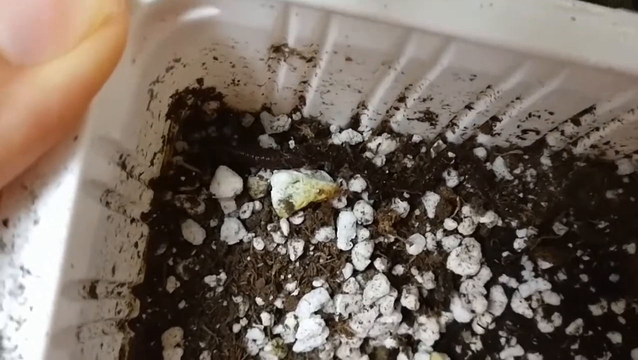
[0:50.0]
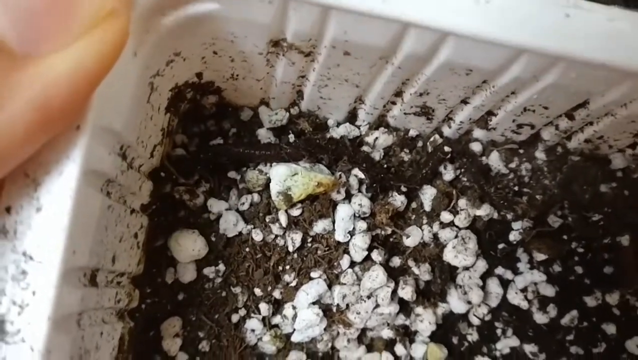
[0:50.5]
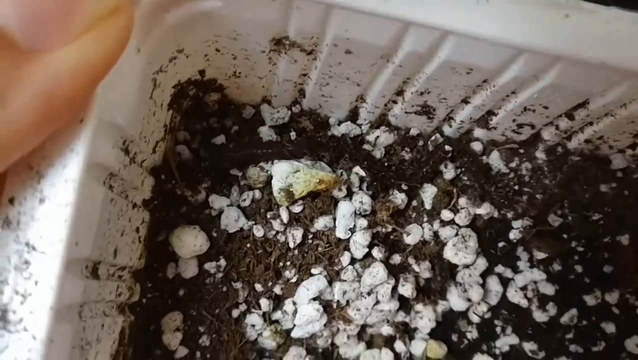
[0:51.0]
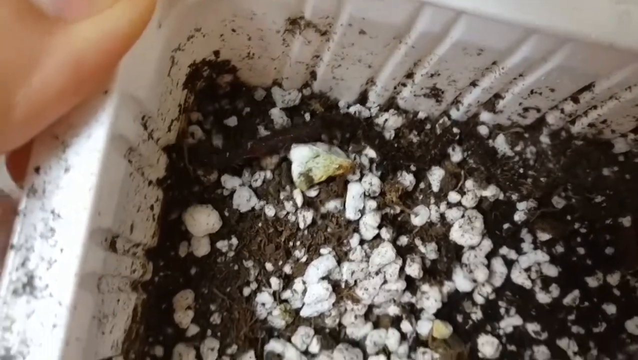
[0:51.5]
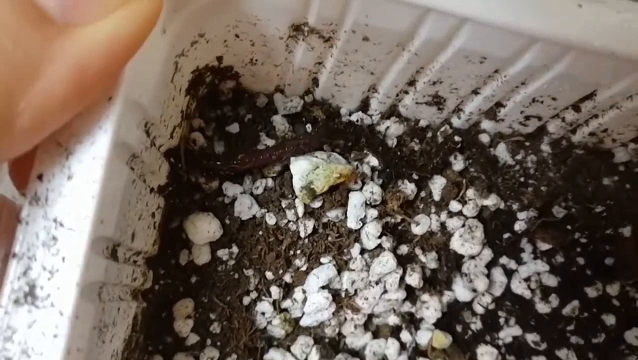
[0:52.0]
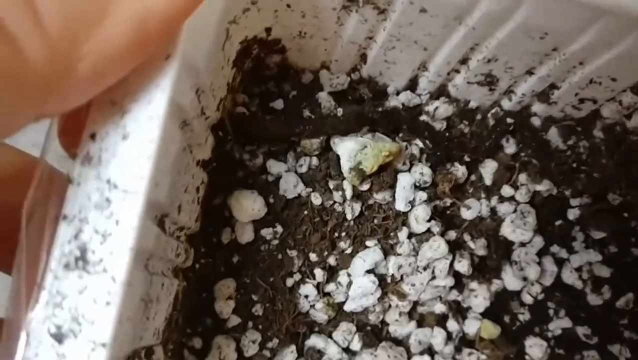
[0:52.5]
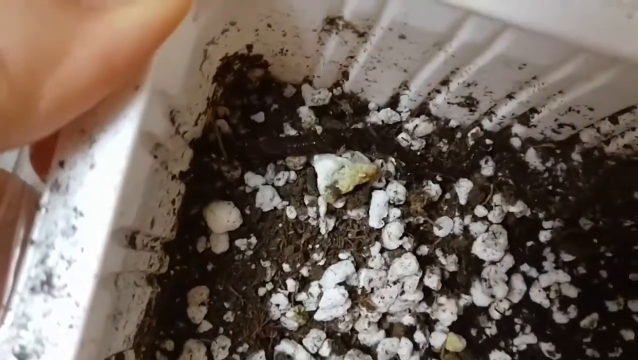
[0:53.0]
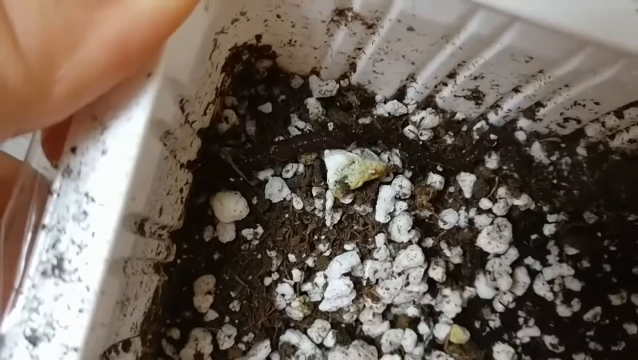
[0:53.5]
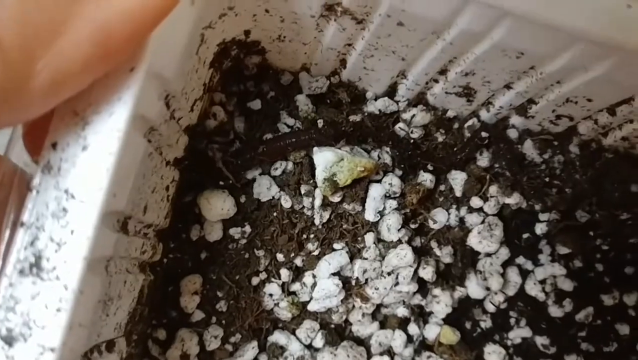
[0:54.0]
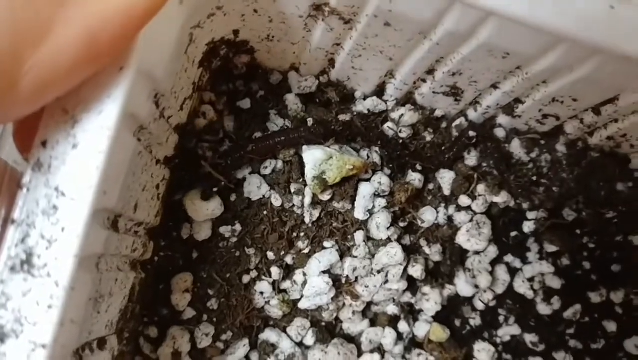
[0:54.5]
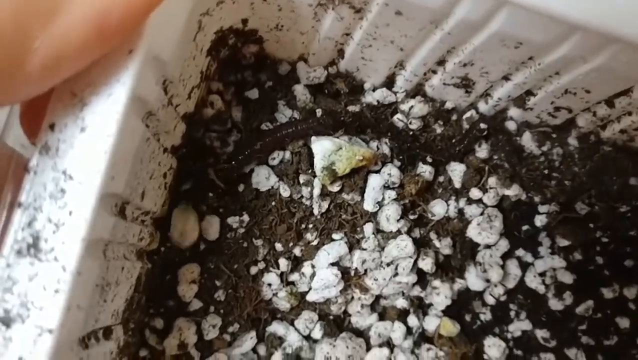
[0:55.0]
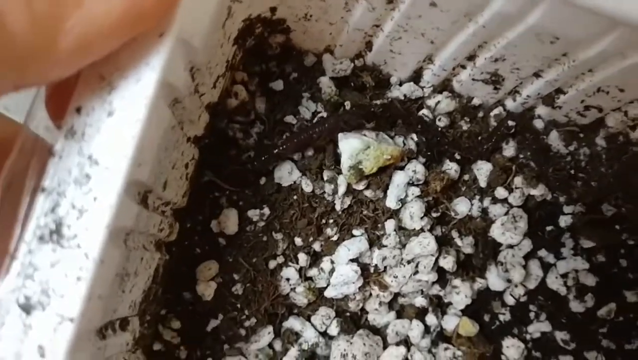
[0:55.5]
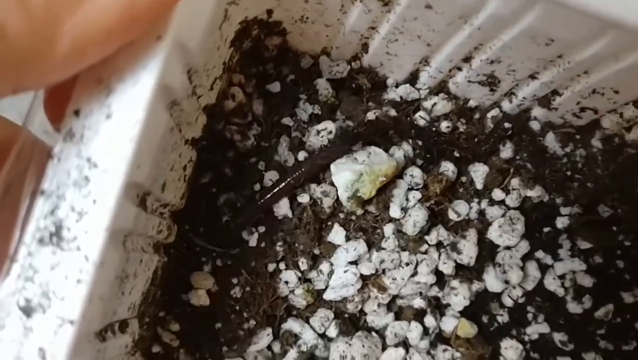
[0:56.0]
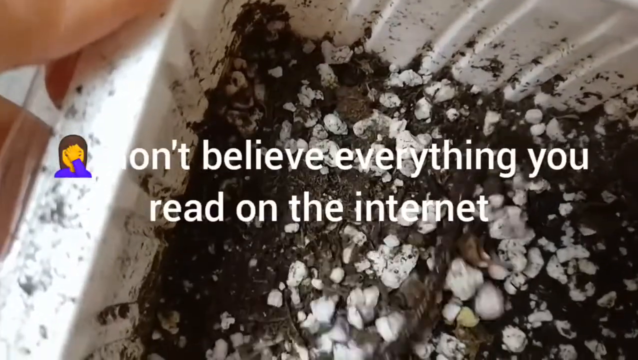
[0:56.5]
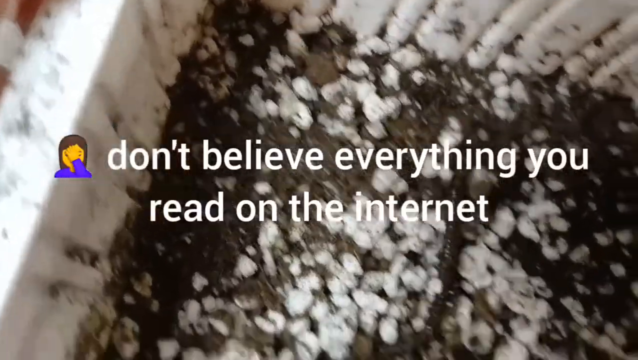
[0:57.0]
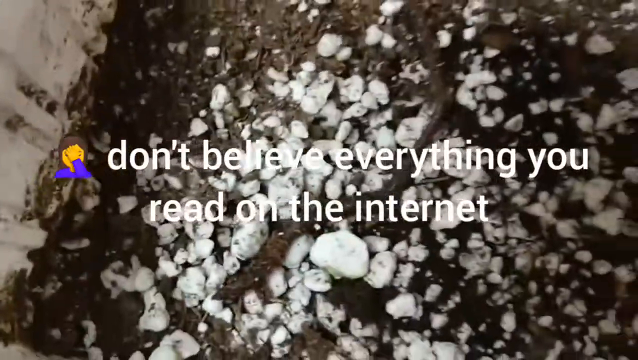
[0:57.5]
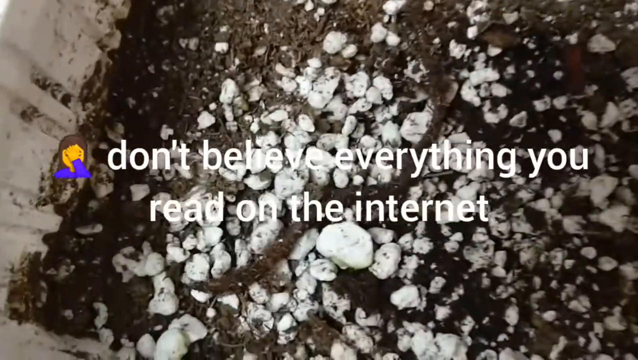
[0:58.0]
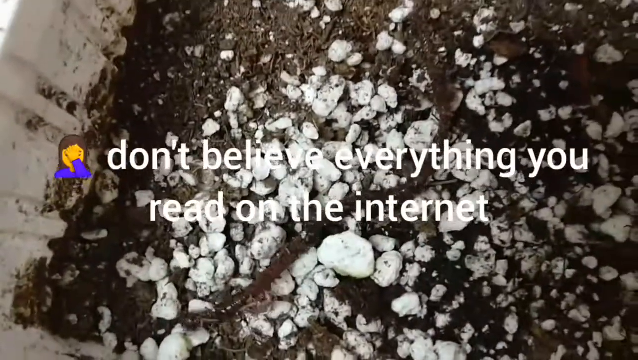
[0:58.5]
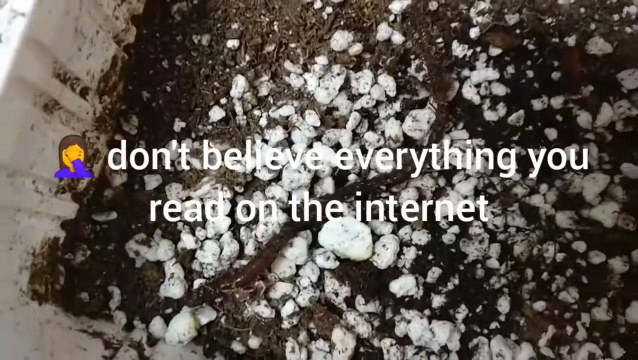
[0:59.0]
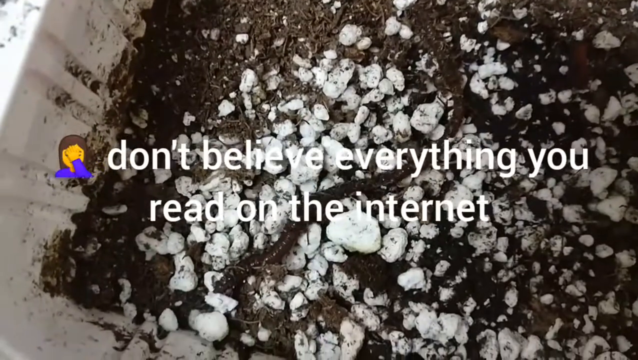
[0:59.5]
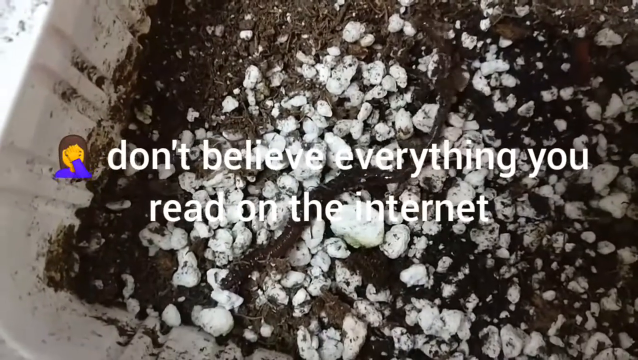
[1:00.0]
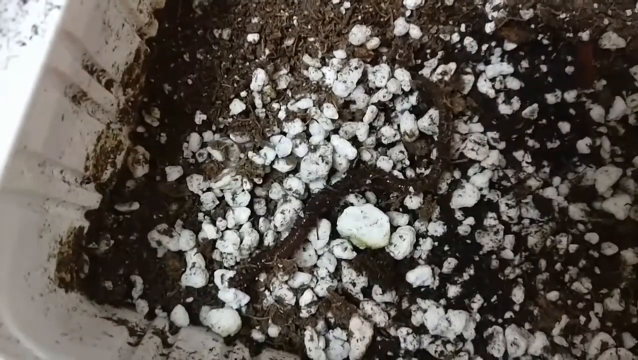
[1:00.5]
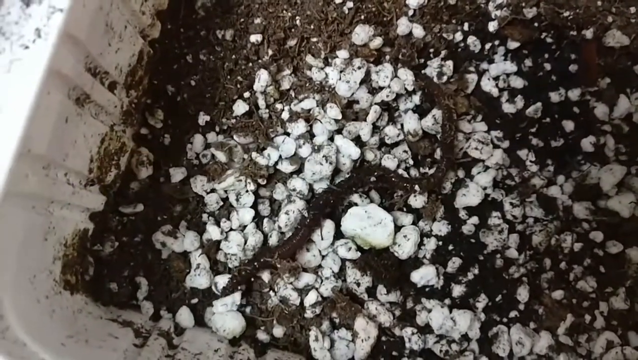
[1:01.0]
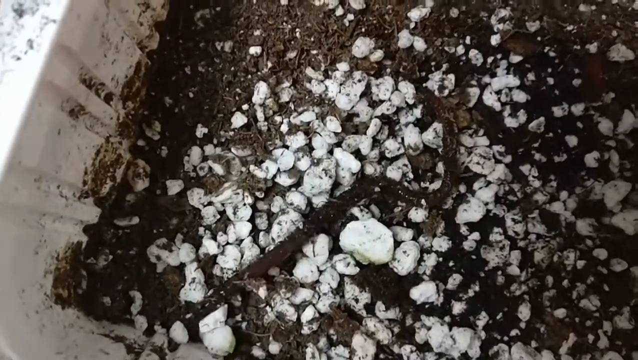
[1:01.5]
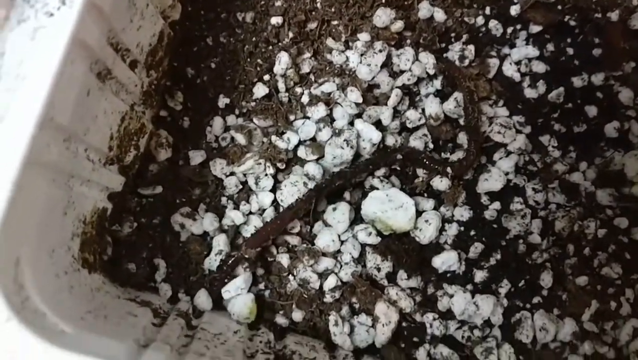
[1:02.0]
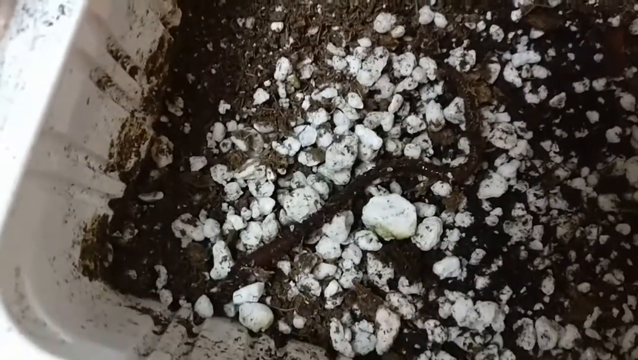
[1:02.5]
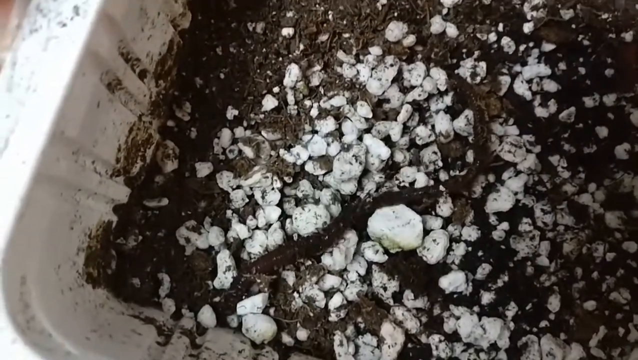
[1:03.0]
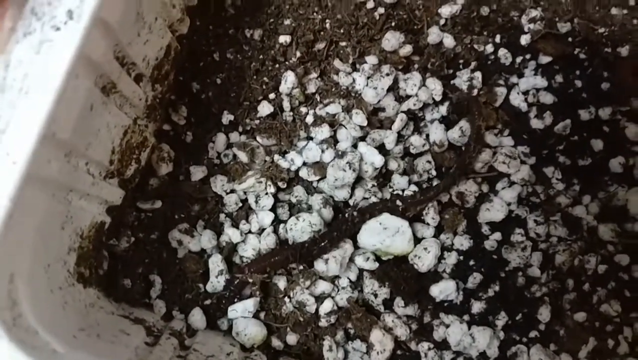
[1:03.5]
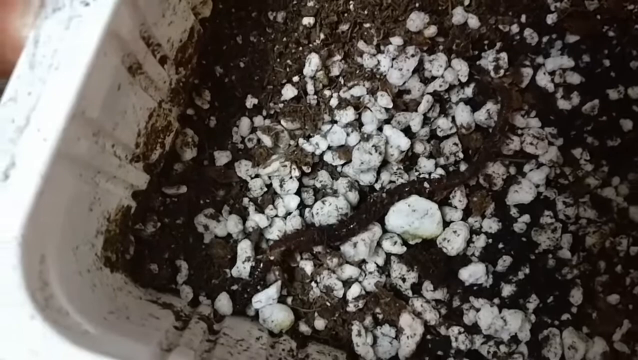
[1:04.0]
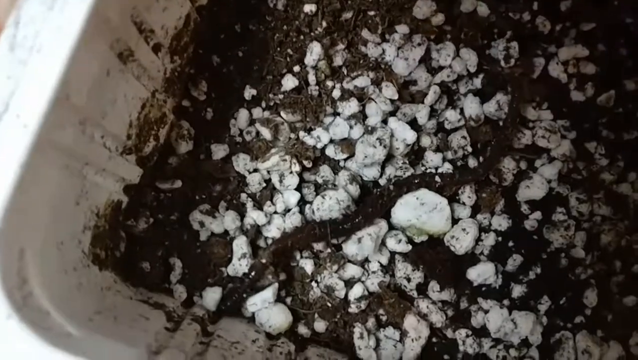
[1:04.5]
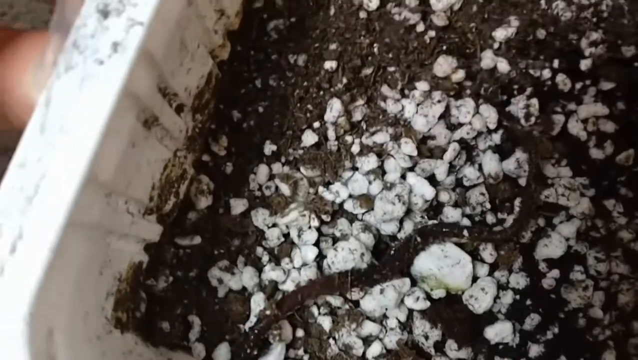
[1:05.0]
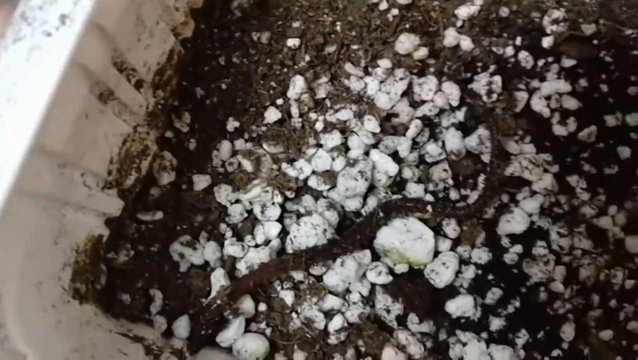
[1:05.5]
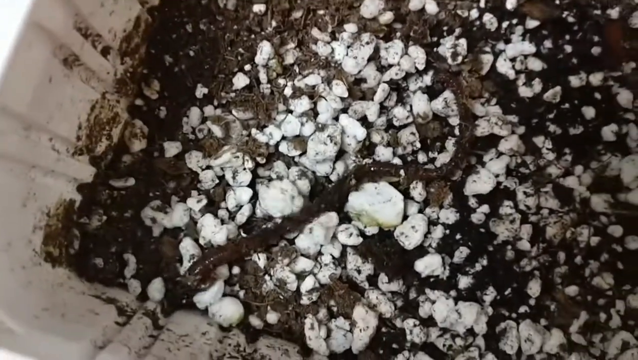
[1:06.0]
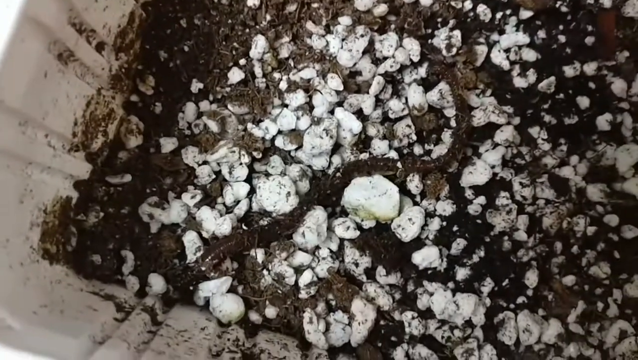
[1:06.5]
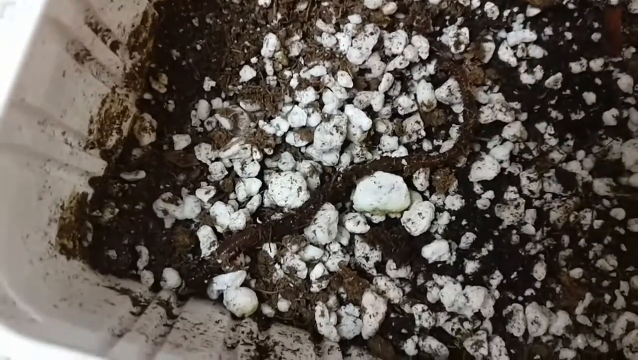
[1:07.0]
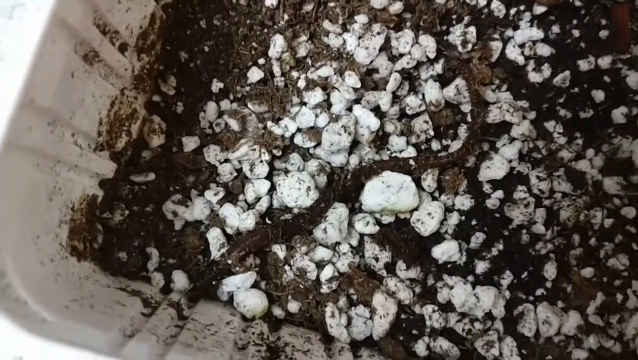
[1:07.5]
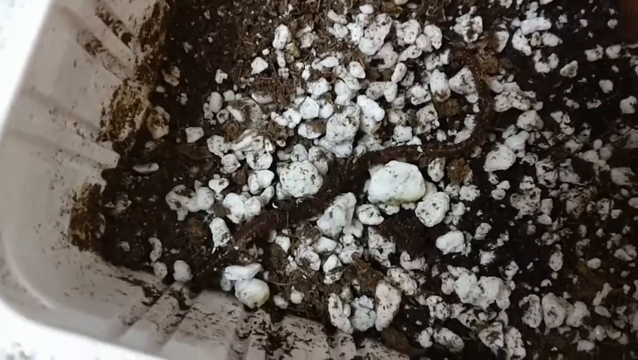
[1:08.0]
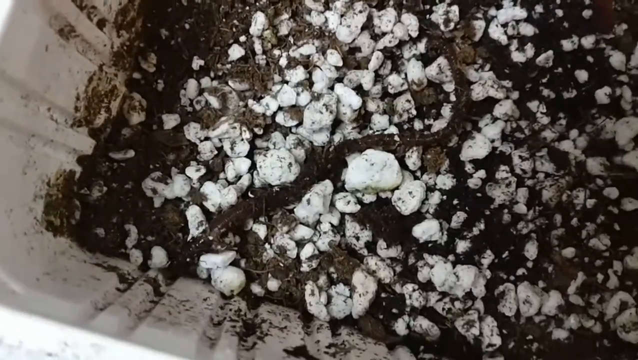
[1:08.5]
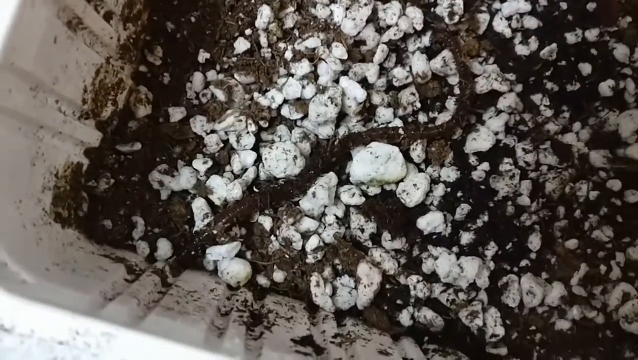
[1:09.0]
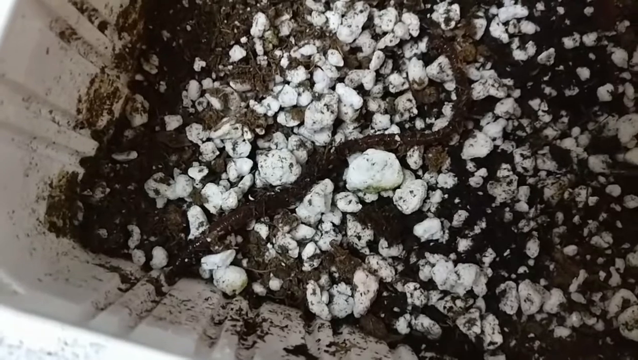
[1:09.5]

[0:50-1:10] Someone films a container of dirt with little white rocks in it. An earthworm in the upper left corner moves around fairly quickly, kind of pushing the dirt and rocks. It kind of falls over, rolls over some rocks, and ends up toward the lower left corner of the bin. Computer-generated text appears: "don't believe what you see on the internet." The worm digs in the bottom left corner, appearing to try to dig but seeming to struggle. The camera is probably held in the person's right hand, as a left thumb is visible on the corner of the bin. The shot is zoomed in and shaky, moving as they record.